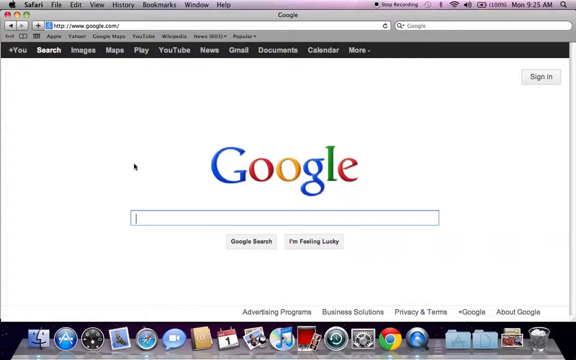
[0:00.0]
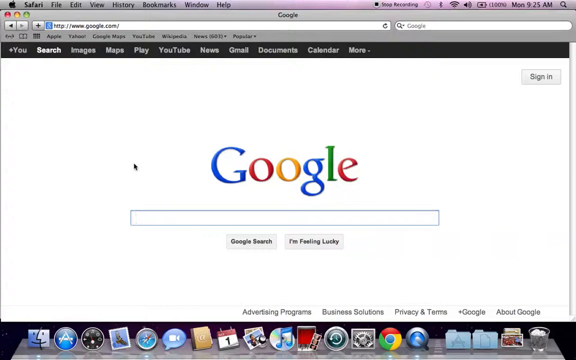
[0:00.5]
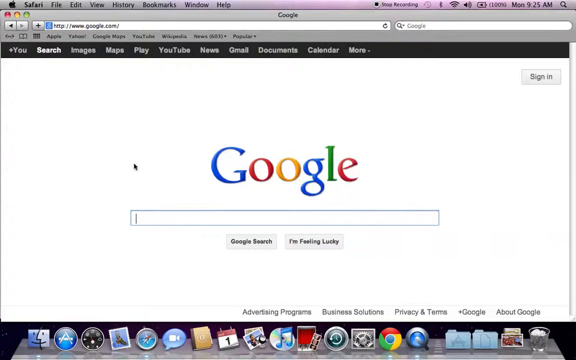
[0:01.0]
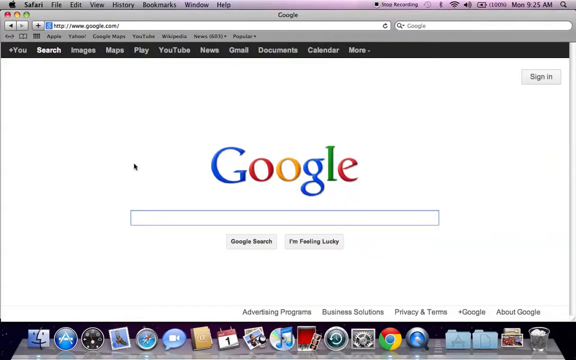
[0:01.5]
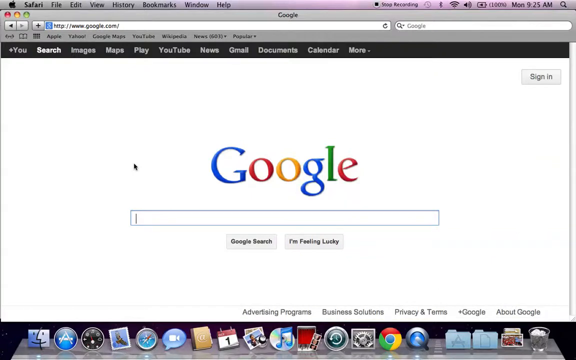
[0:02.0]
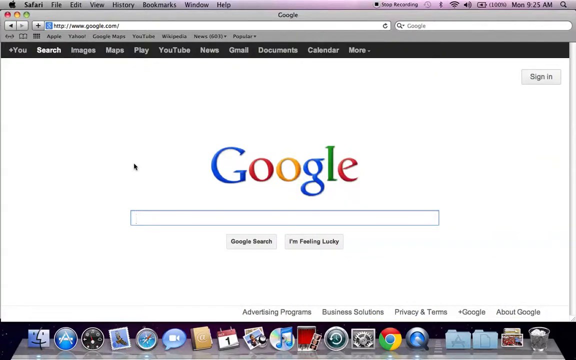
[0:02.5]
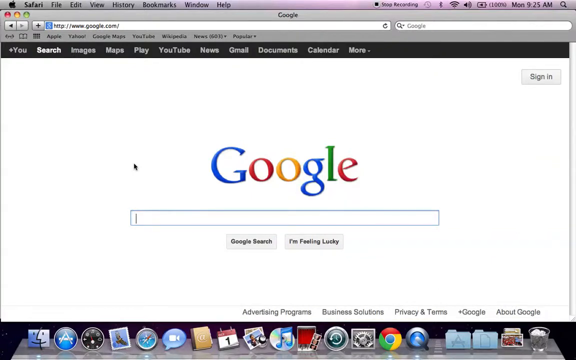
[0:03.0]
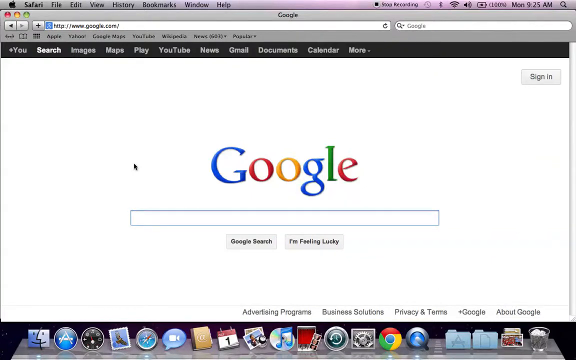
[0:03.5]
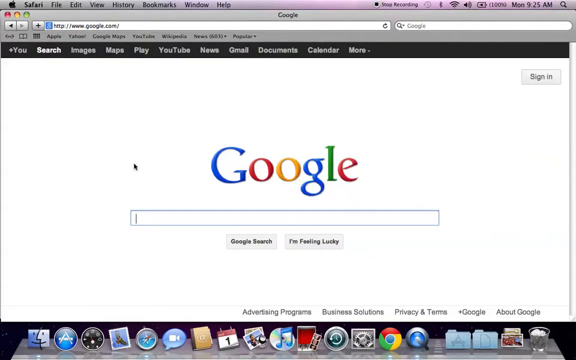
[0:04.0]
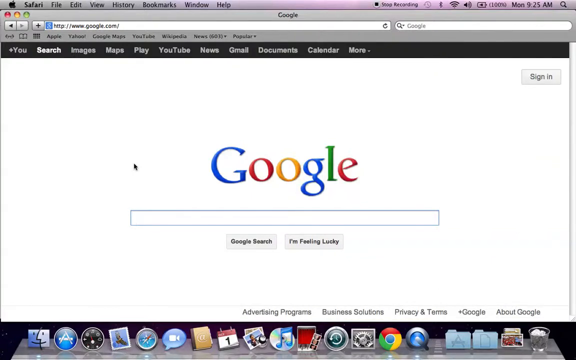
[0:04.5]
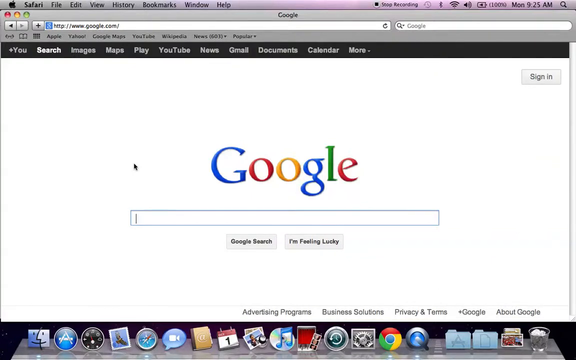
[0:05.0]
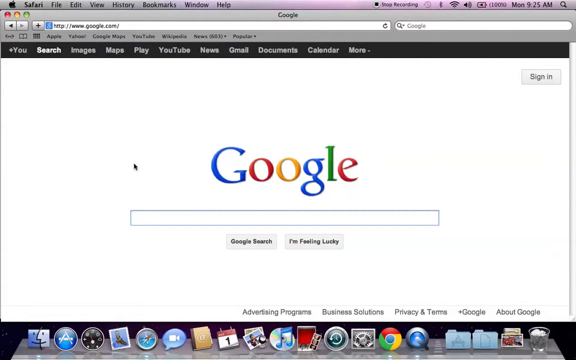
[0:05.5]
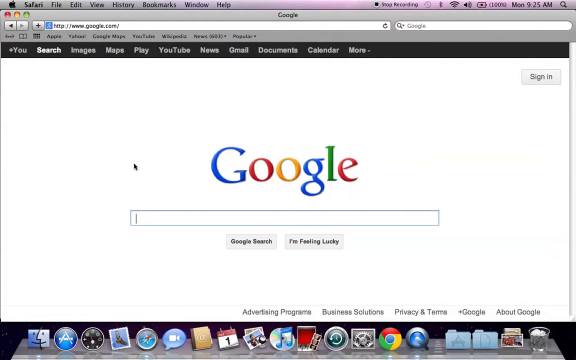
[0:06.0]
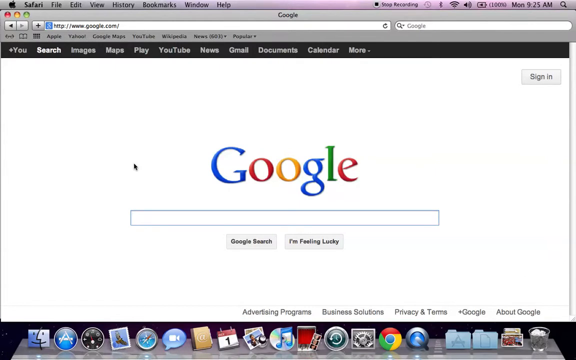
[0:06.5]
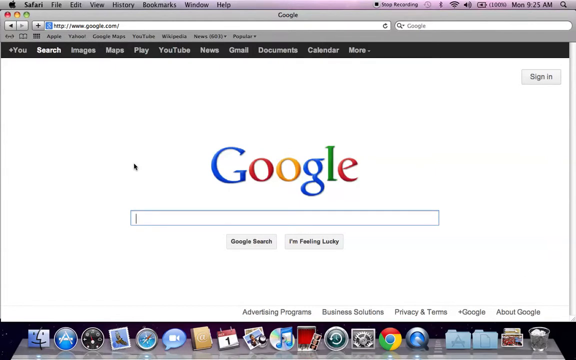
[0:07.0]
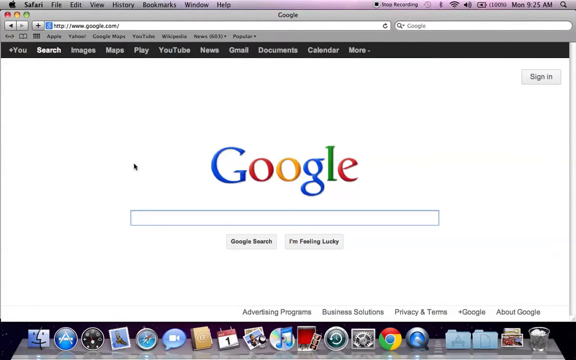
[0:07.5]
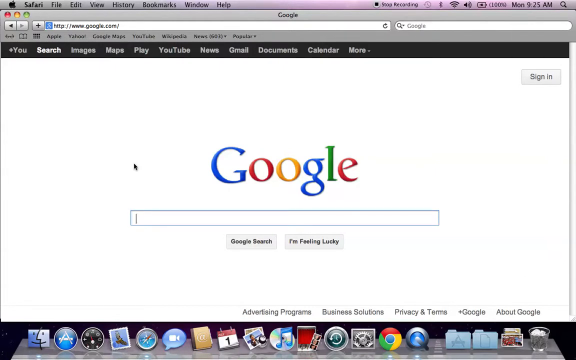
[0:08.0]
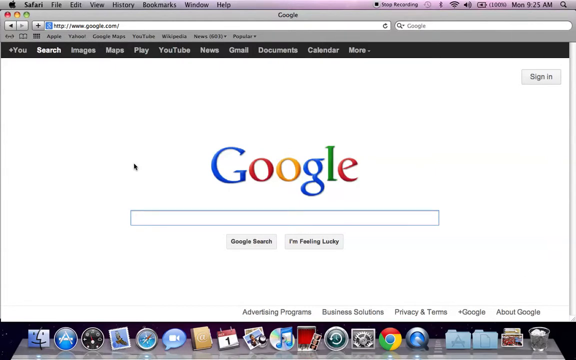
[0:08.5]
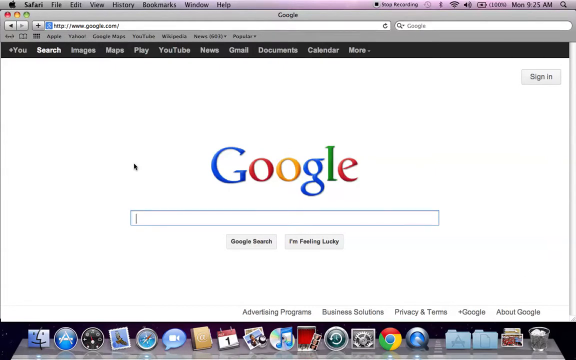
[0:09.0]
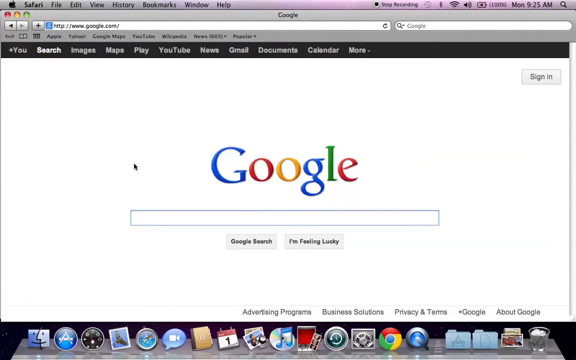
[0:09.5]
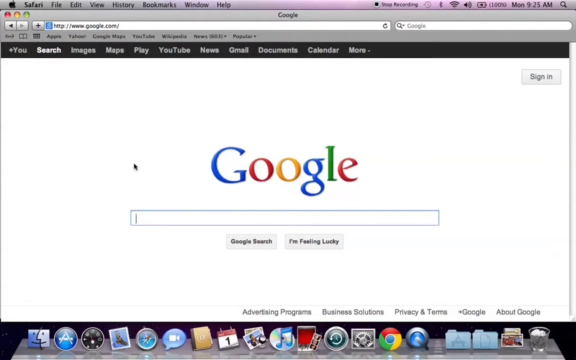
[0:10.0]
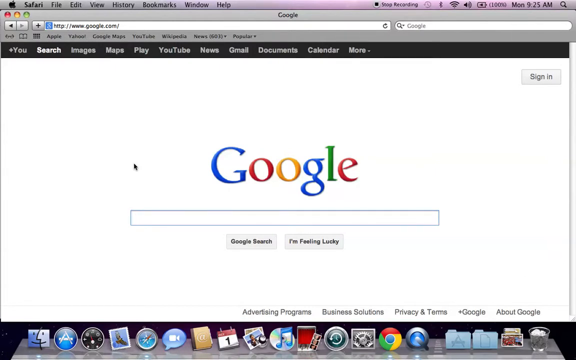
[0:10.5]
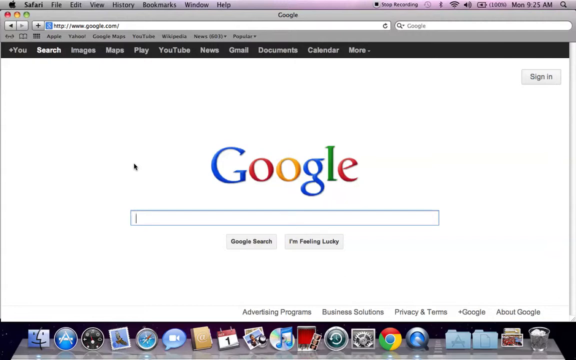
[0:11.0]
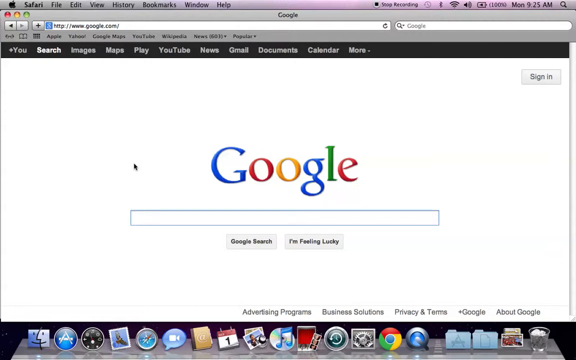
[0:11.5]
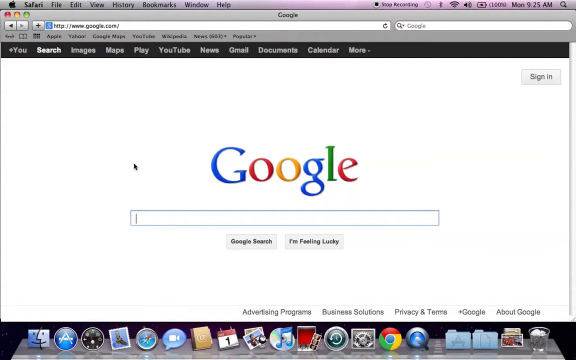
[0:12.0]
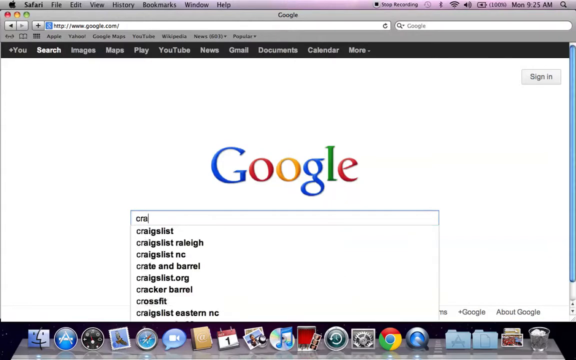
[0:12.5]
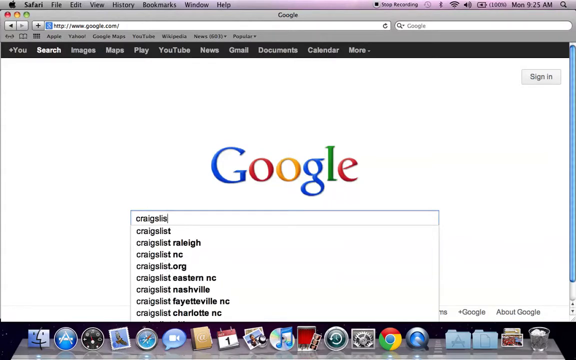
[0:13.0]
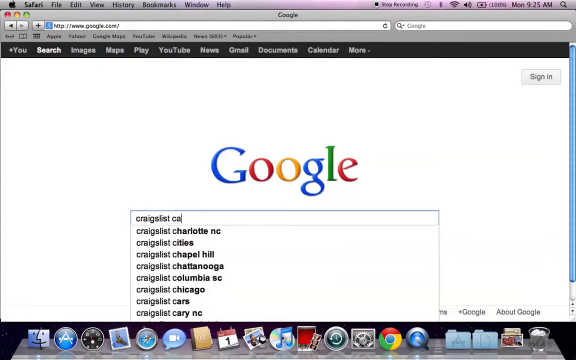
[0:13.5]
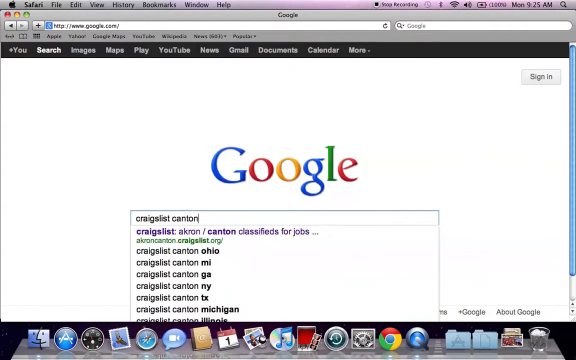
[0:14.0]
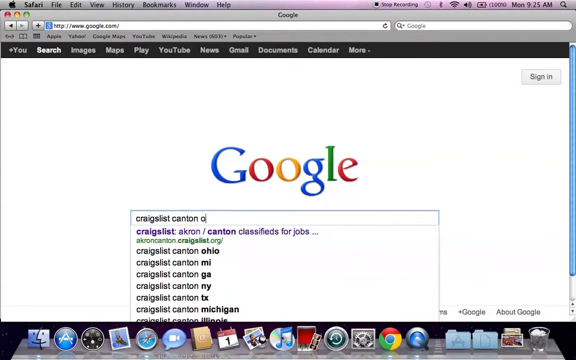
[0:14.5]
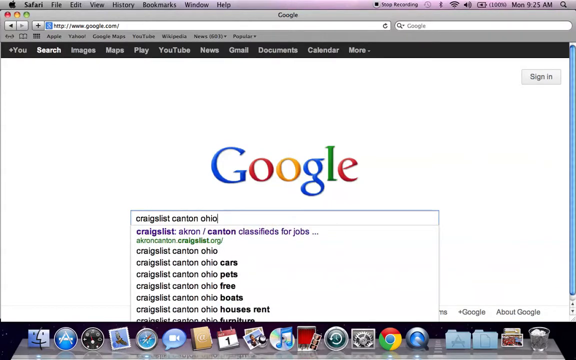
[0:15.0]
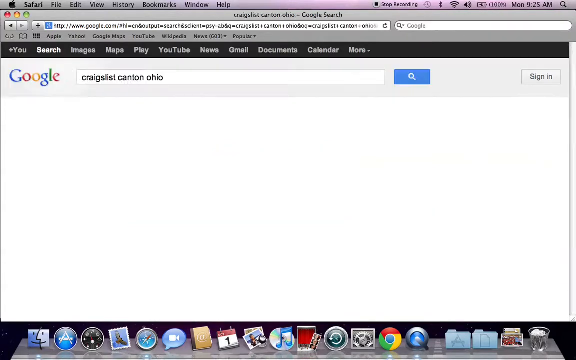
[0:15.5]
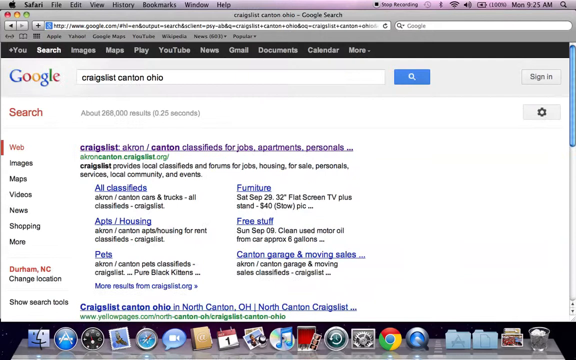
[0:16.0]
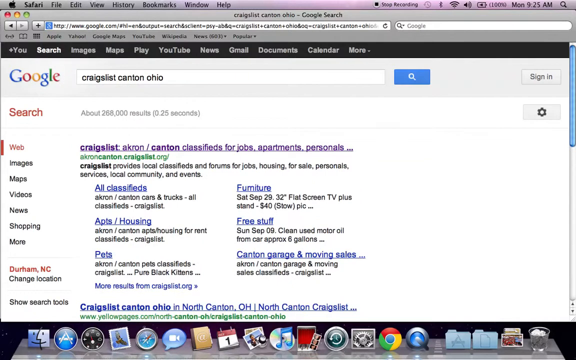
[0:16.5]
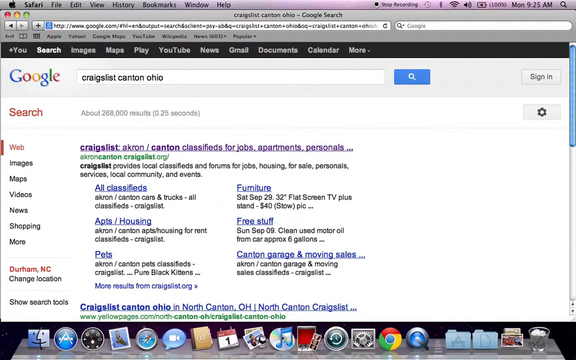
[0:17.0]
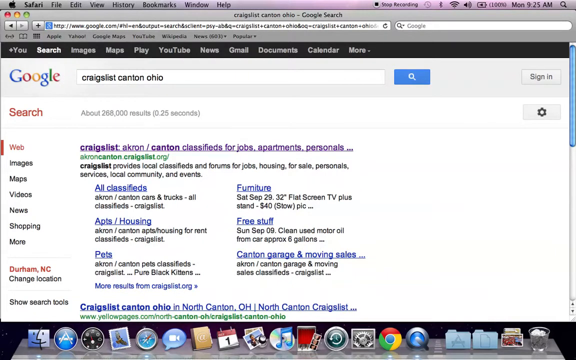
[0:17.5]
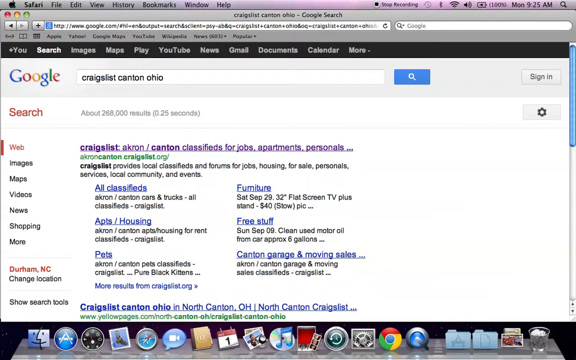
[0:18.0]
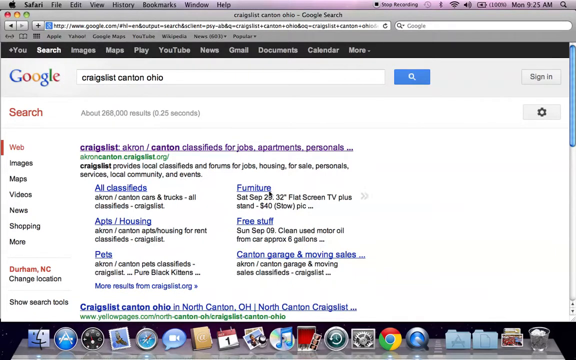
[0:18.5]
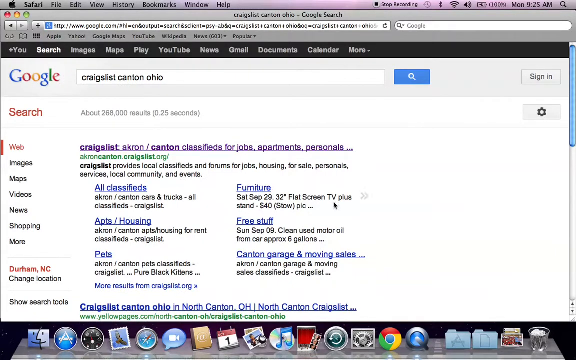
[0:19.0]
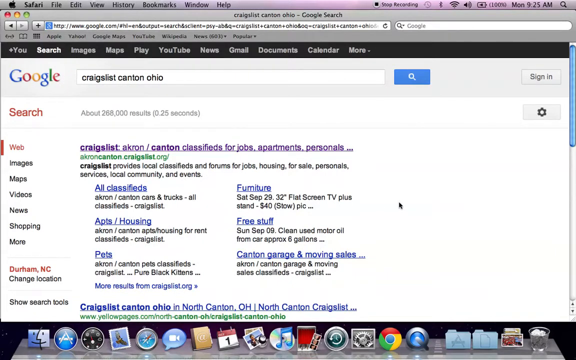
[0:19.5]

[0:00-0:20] The video opens on a screenshot of someone's computer, most likely a desktop or a laptop. The main thing visible is the Google start screen, with the typical Google logo written with a blue G, a red O, a yellow O, a blue G, a green L and a red E. The cursor blinks in the search box as if waiting for input, and underneath are two buttons, "Google search" and "I'm feeling lucky". At the top of the screen are several layers: the very top has an Apple icon followed by "Safari", "File", "Edit", "View", "History", "Bookmarks", "Window" and "Help". Below that are red, yellow and green icons, with "Google" in the middle of the screen, then a left and a right arrow and a search bar. Another line holds what are possibly bookmarked sites; though blurry, they appear to read "Apple", "YouTube", "Google Maps", and maybe "YouTube", "Wikipedia" and "News" followed by other words. It looks like someone is typing, as words appear in the search box in the middle of the screen: "Craigslist, Canton, Ohio". The screen suddenly switches to the results, and the first one, underlined in purple as if already clicked, is a Craigslist Akron/Canton result for "classifieds for jobs, apartments, personals". The screen then goes back to the Google search screen.